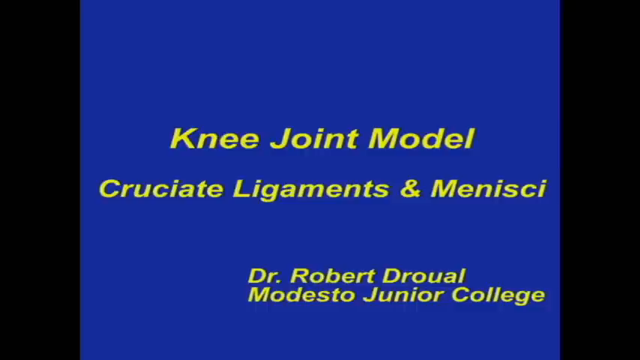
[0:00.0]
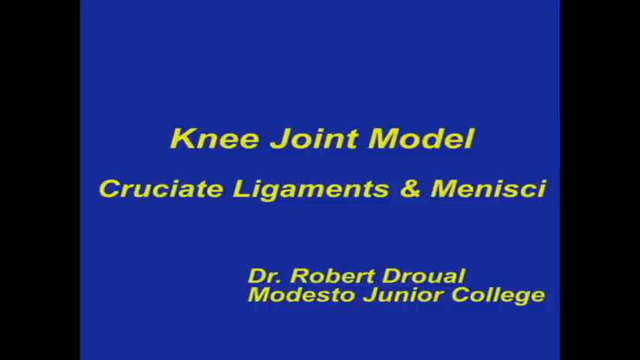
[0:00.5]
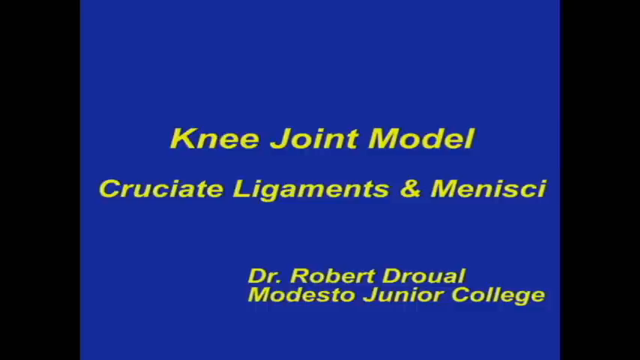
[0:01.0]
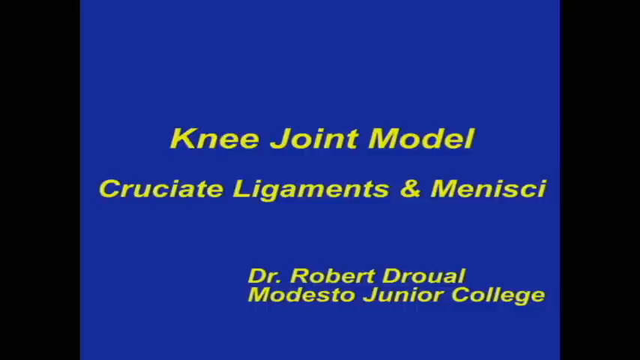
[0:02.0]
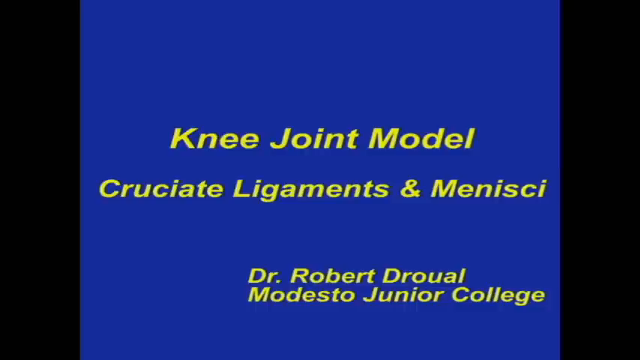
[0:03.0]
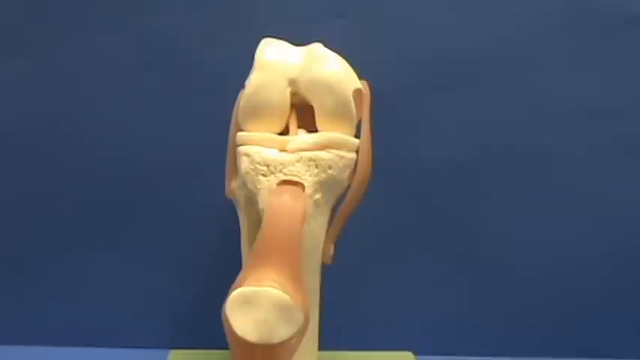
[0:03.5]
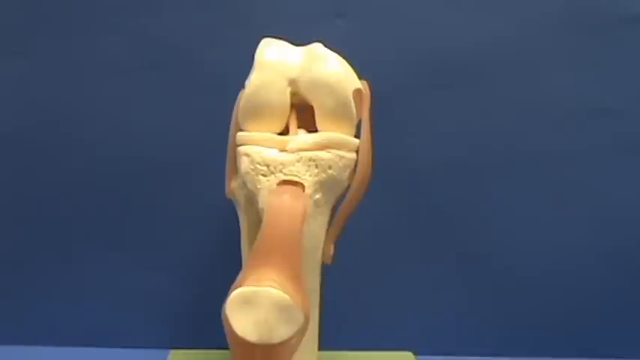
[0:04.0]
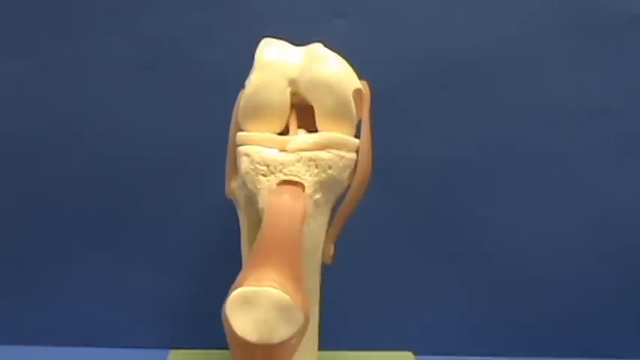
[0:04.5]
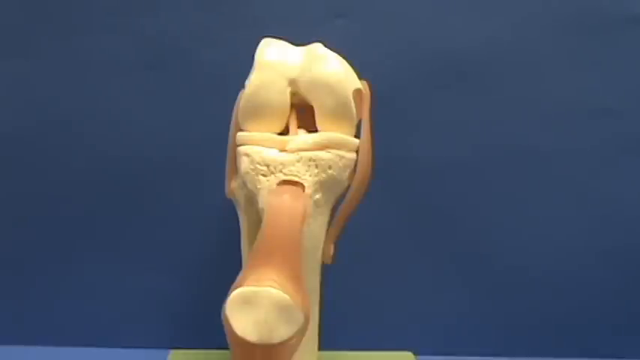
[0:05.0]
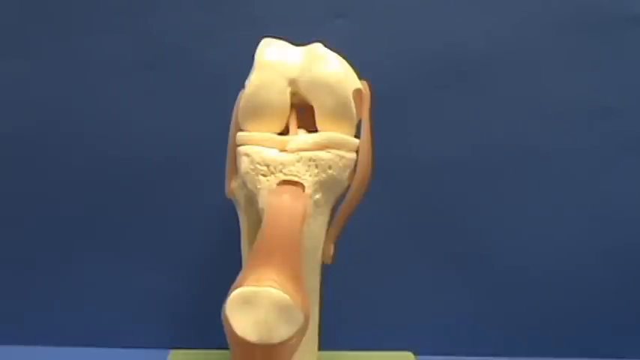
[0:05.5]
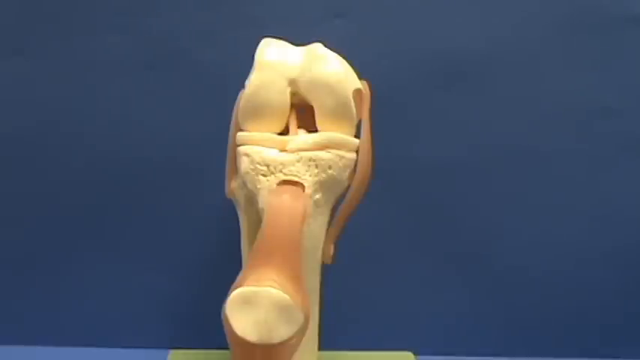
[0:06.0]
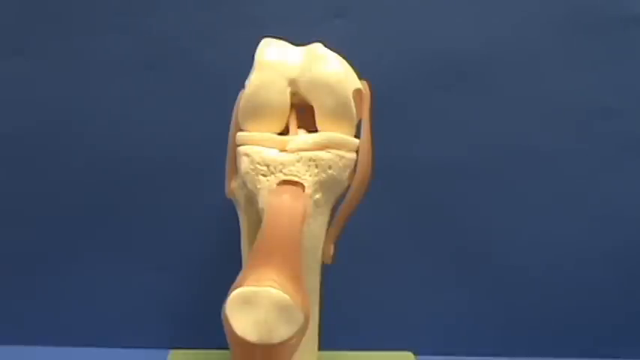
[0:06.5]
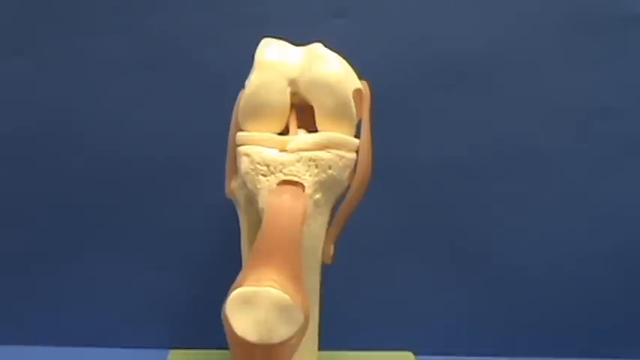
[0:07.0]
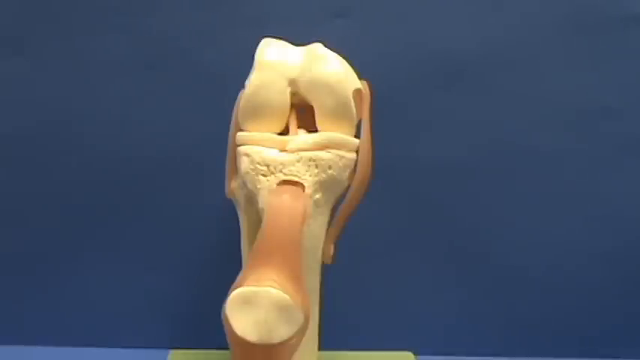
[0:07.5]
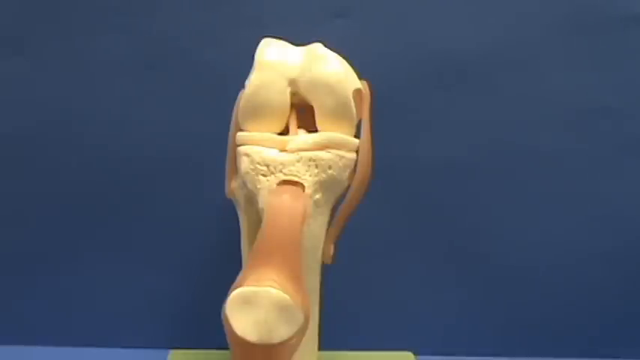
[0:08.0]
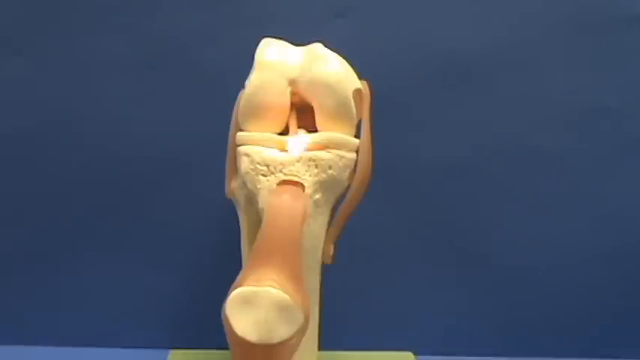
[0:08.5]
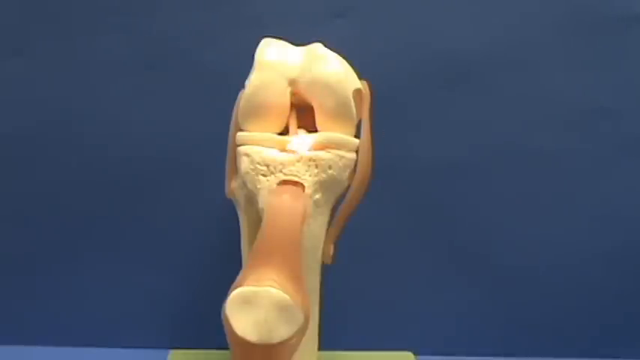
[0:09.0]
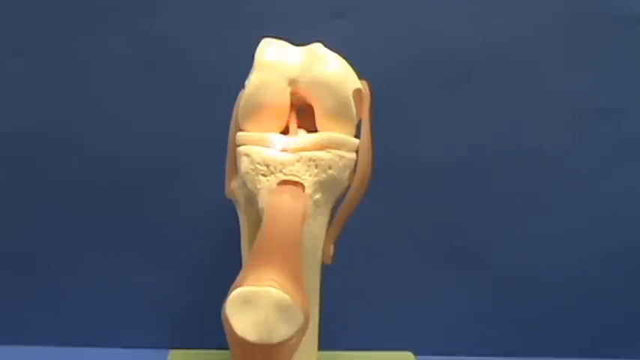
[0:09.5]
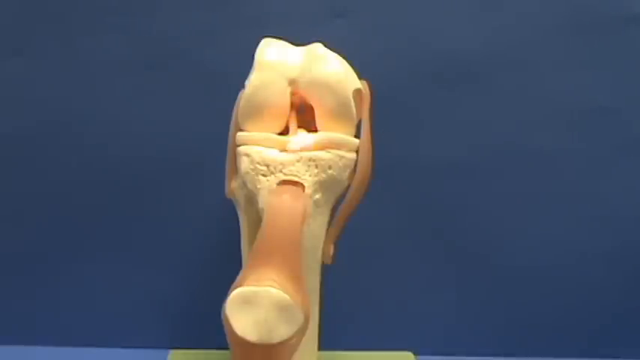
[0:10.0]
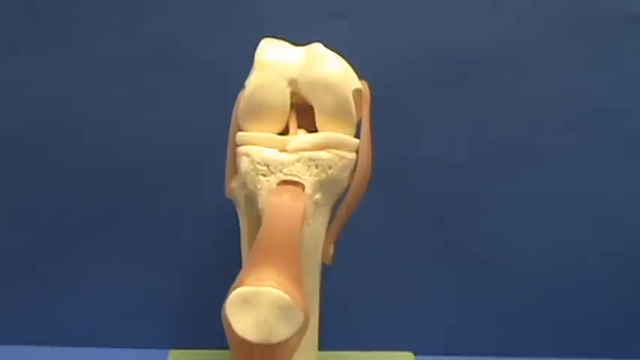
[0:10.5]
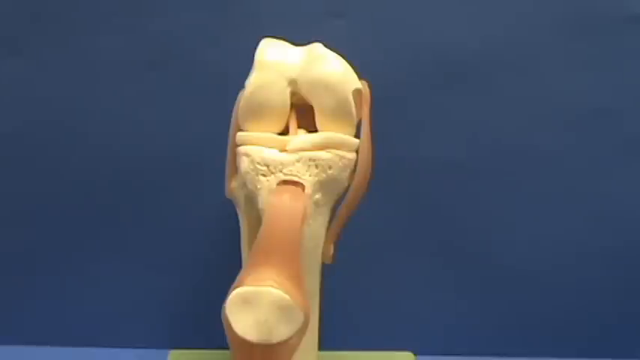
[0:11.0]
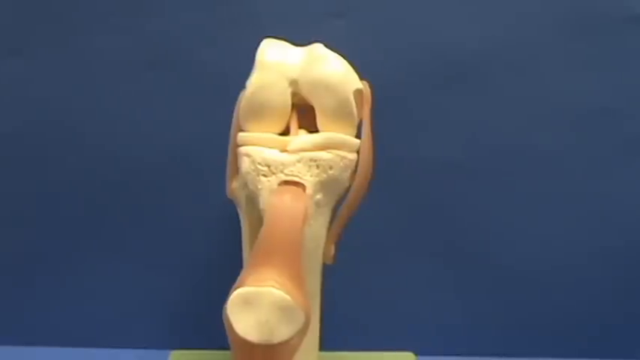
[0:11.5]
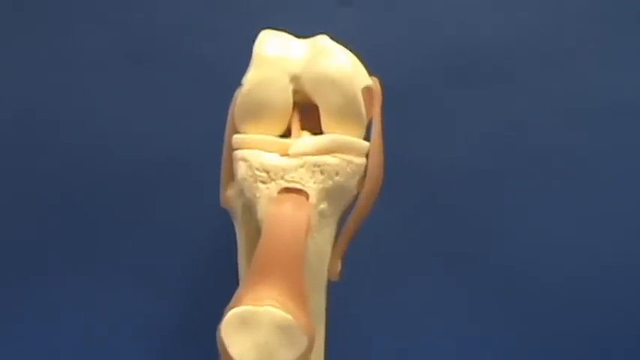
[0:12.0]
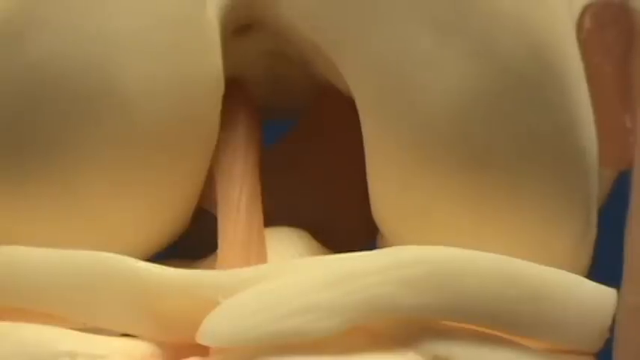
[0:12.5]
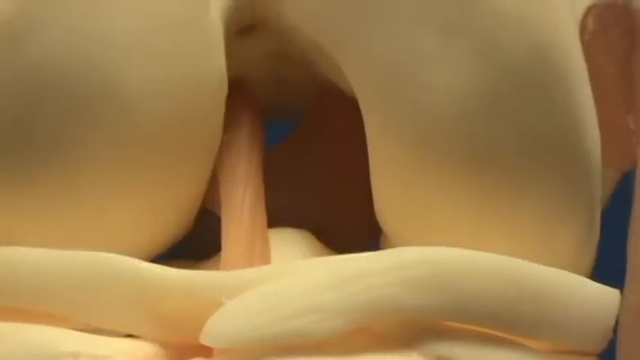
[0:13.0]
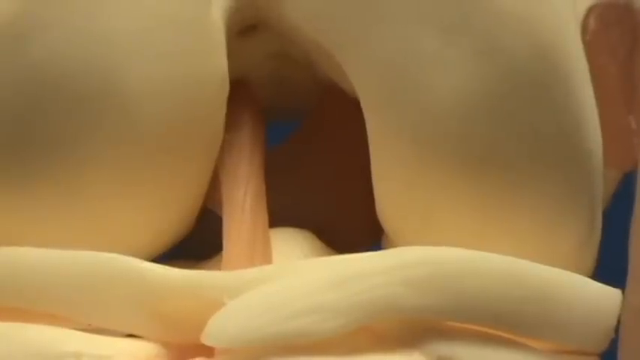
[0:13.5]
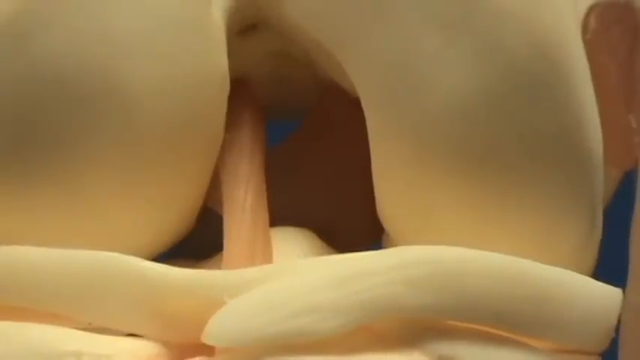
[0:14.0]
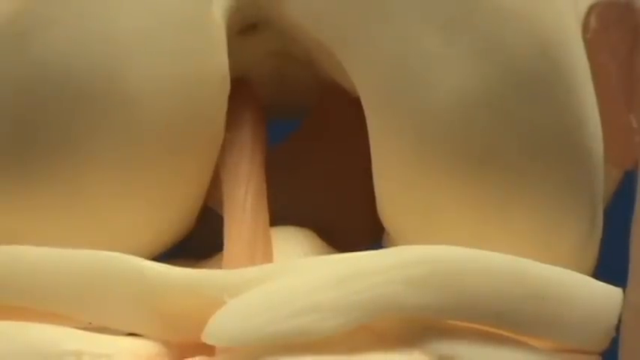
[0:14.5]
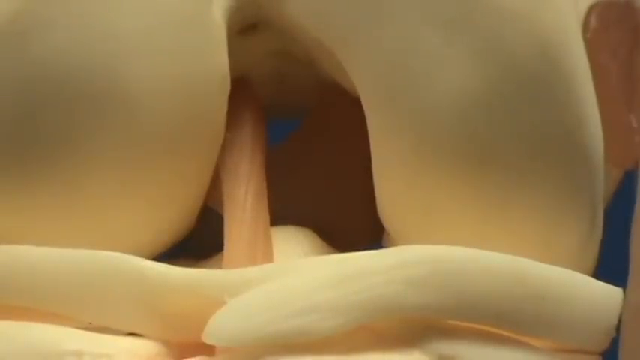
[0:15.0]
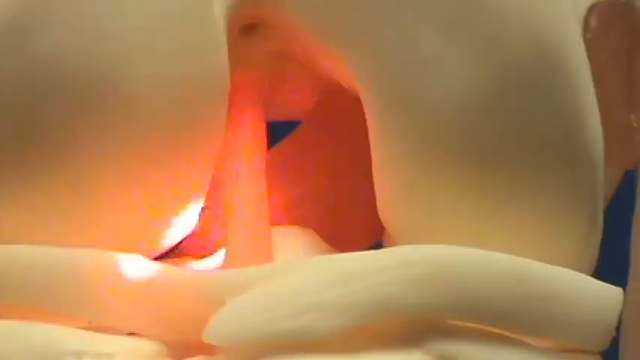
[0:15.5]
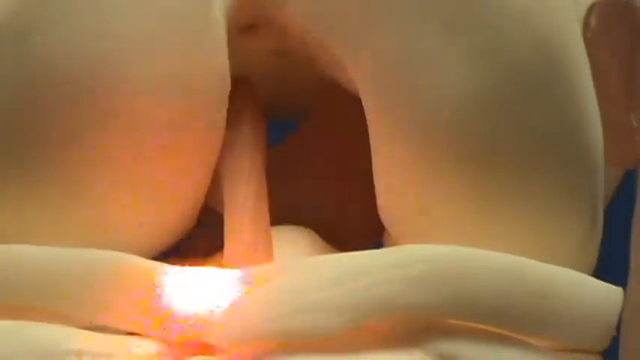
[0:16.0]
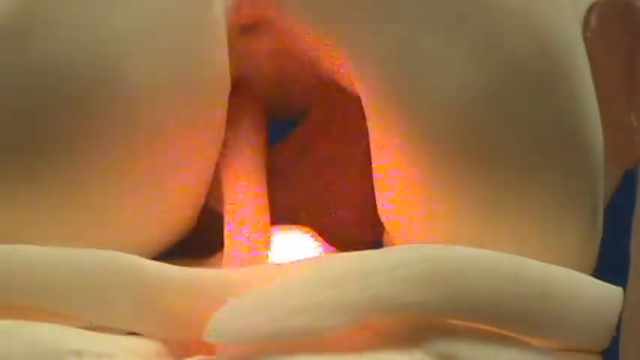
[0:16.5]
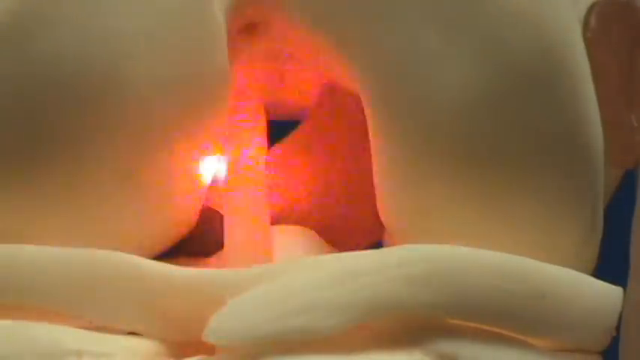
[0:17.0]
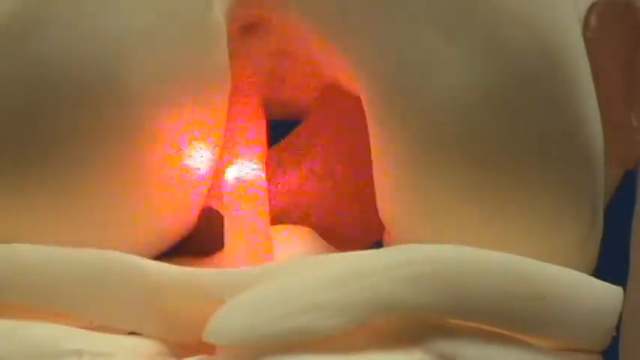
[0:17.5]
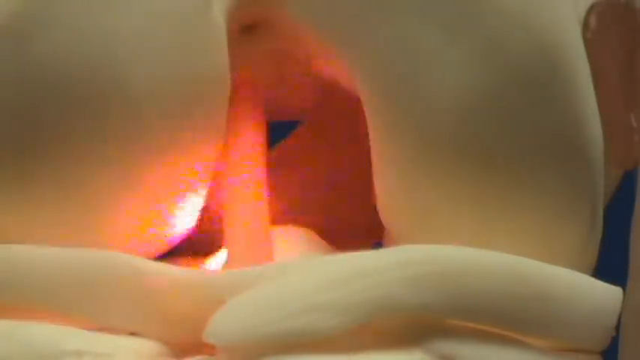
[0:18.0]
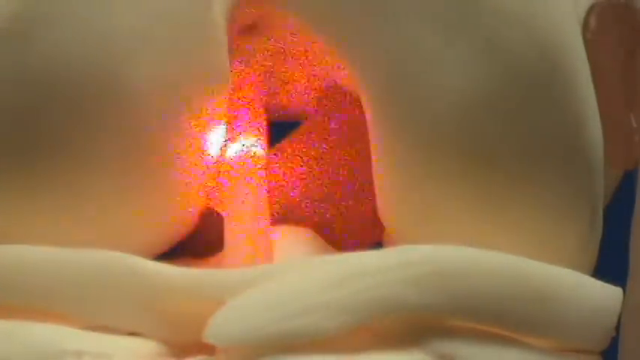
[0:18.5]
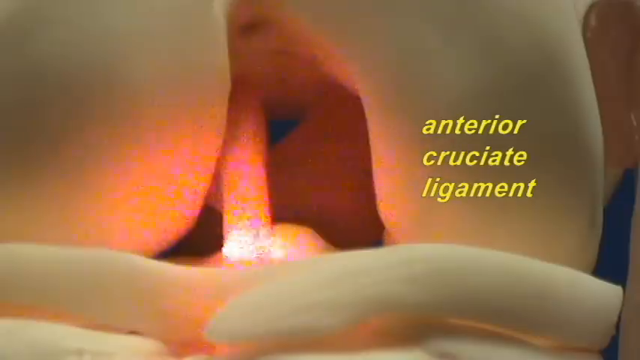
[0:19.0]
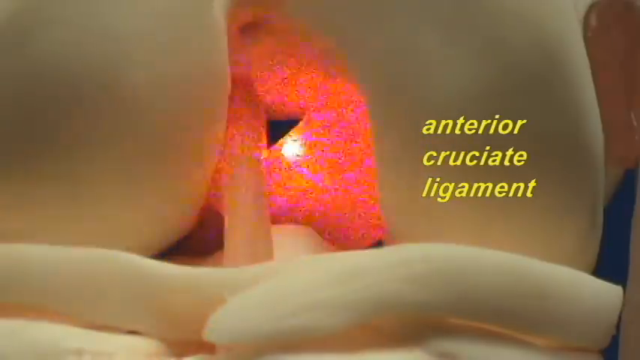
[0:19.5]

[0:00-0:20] The video opens on a blue background with yellow text that reads "knee joint model cruciate ligaments and menisci by Dr. Robert Drouot Modesto Junior College." The screen holds on this for a few seconds, then transitions to a three-dimensional model of the knee joint. A laser pointer points to the inner part of the model, and the view zooms in on this area. The model is seen from the back of the knee joint, and the laser points at its innermost part. Text appears to the right, pointing to the same area the laser indicates, reading "anterior cruciate ligament."